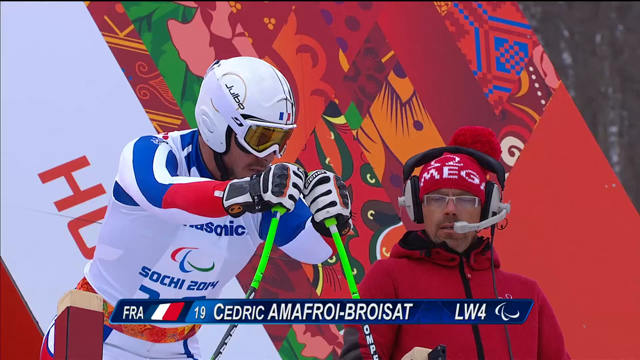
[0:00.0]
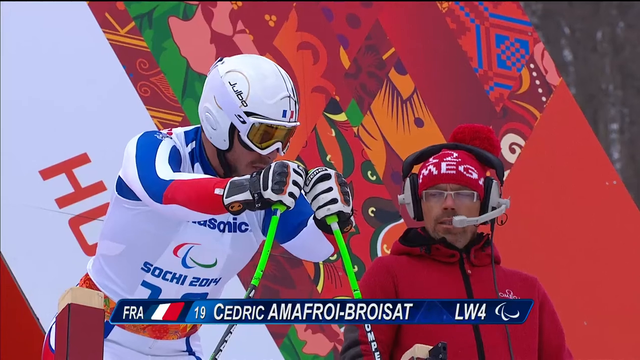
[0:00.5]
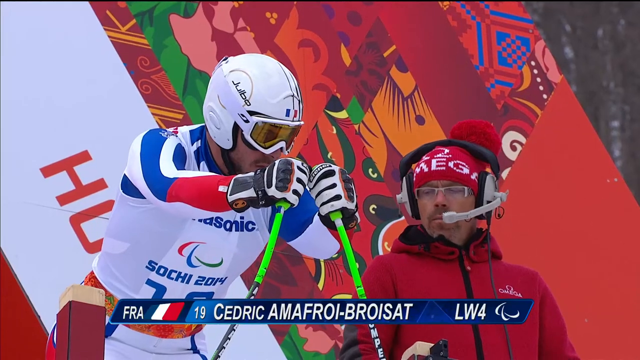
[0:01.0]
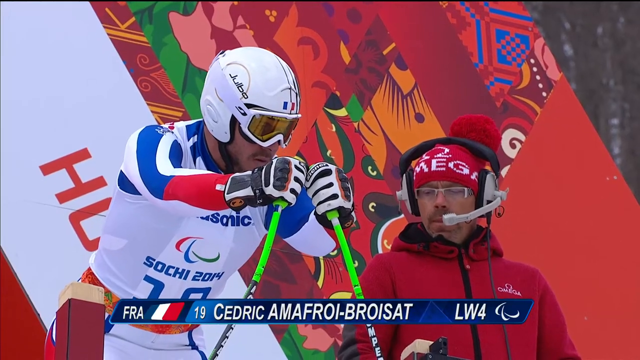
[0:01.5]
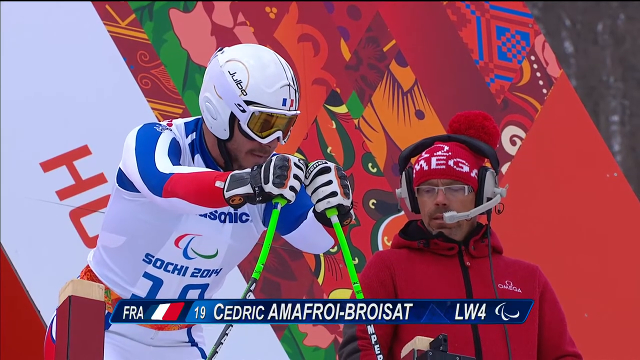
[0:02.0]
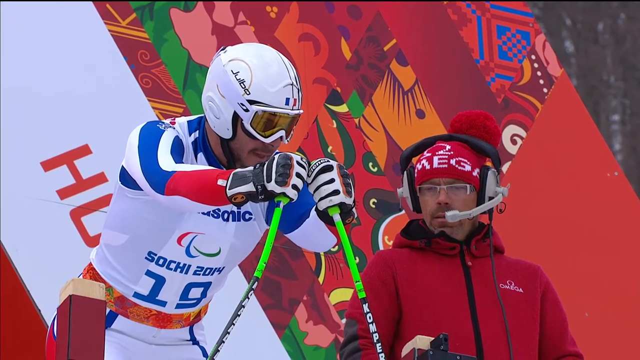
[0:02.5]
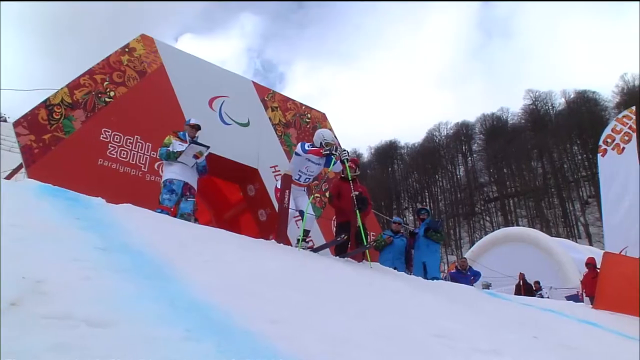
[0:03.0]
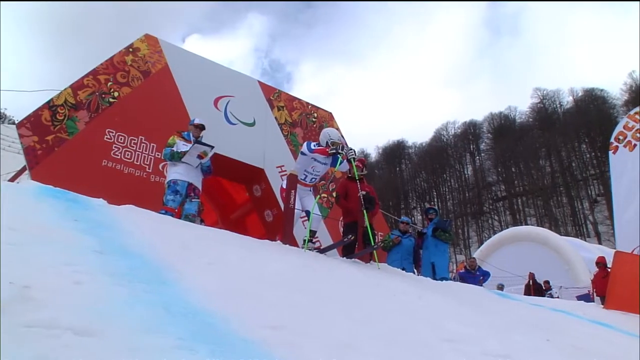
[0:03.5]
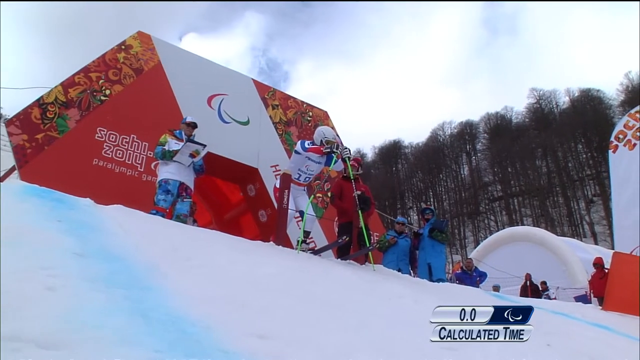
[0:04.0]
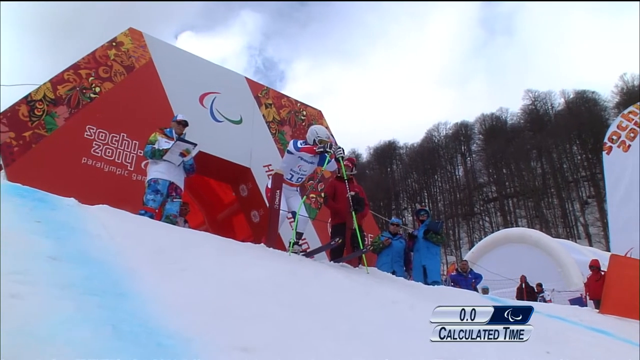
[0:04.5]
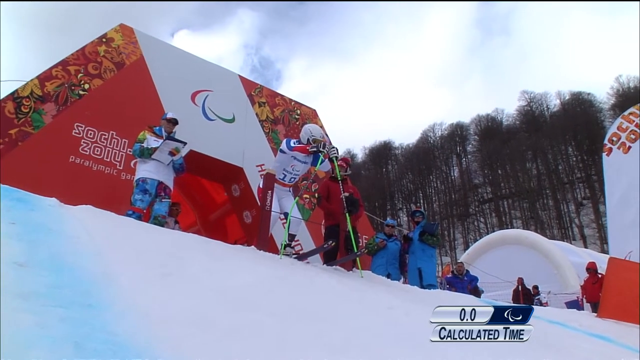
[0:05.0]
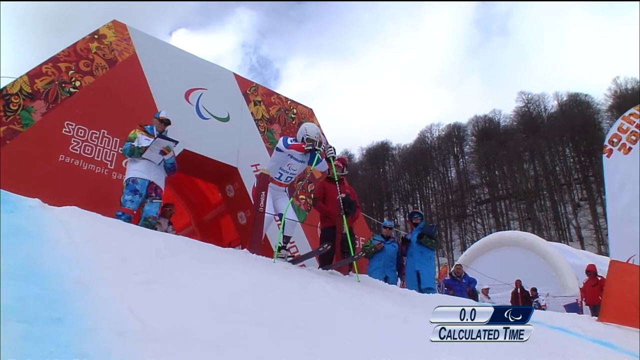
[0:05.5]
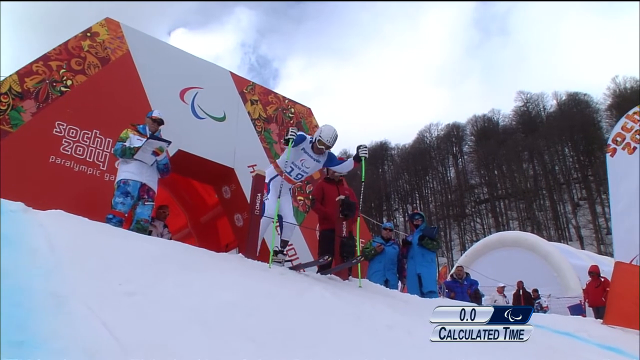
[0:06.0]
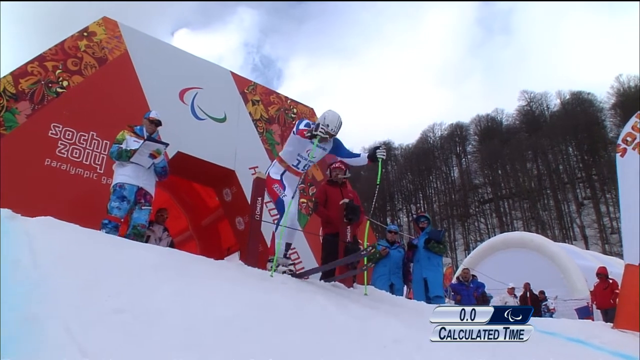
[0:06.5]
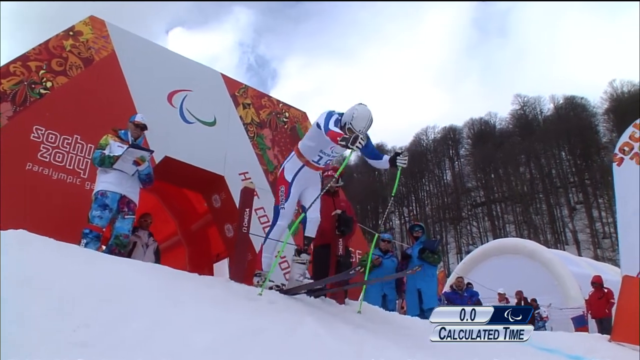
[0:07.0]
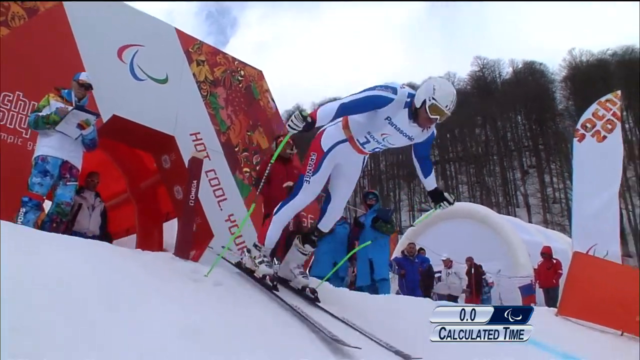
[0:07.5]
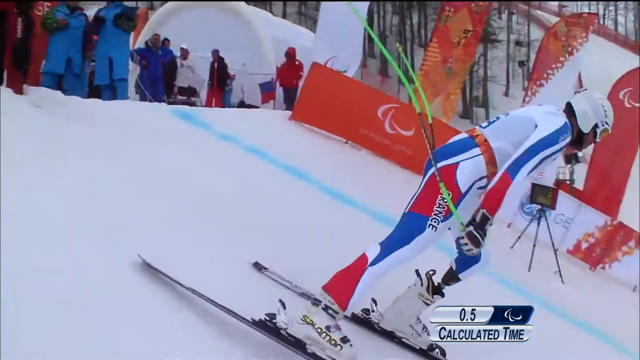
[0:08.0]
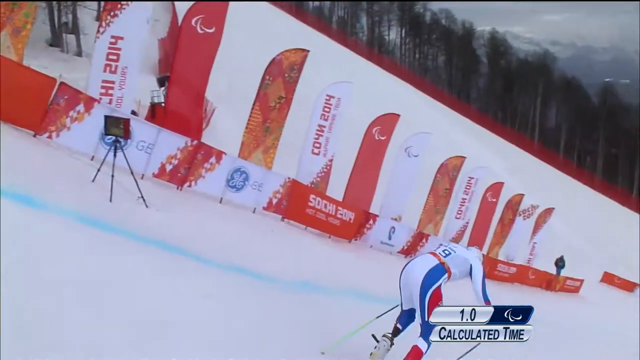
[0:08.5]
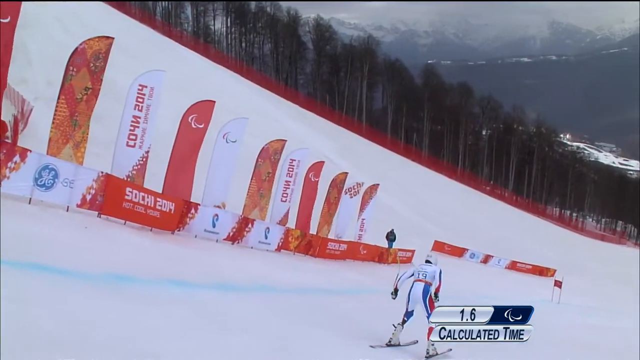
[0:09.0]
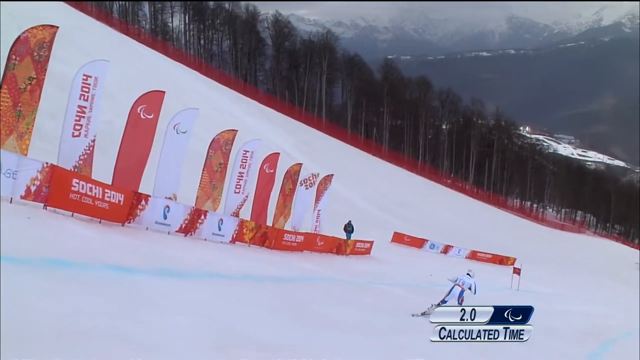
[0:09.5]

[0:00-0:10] The setting looks like mountains in wintertime, with everything white from the snow. The scene is a race for the Olympics, and the skier shown is a member of the France team. He wears almost all white with blue and red stripes, along with a helmet and goggles. A number of the workers, casters and judges are wearing blue and red. Holding two poles, he pushes off with them and starts skiing down the mountain.